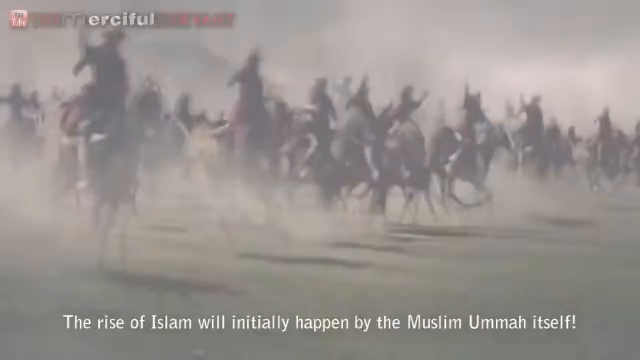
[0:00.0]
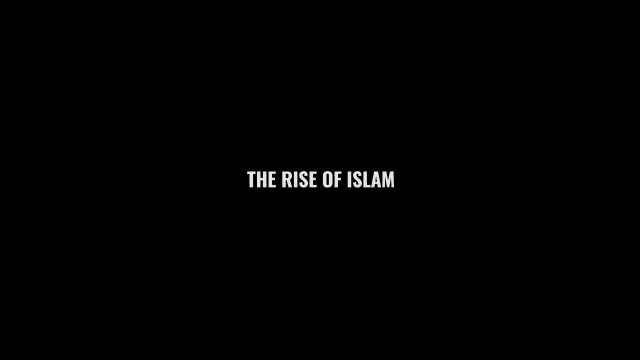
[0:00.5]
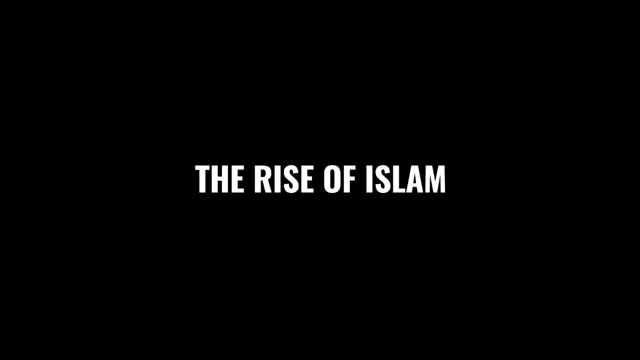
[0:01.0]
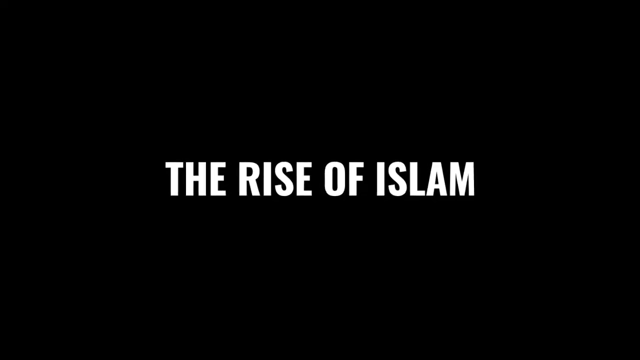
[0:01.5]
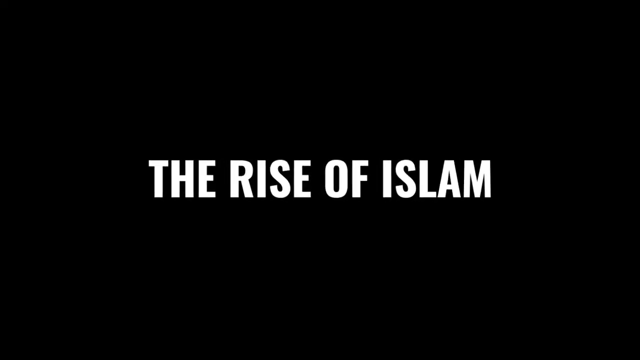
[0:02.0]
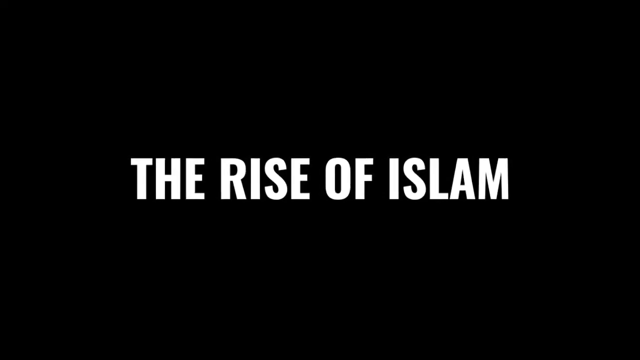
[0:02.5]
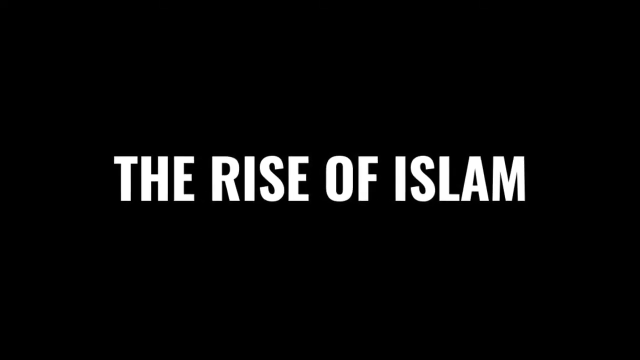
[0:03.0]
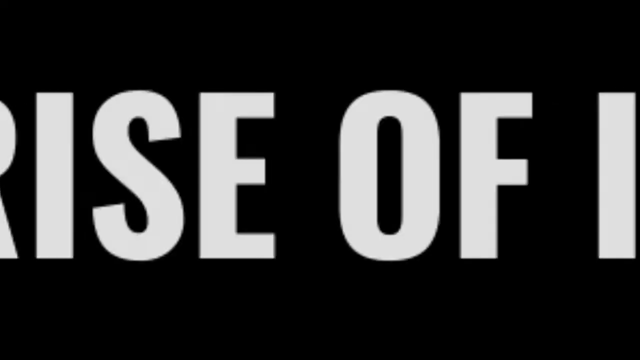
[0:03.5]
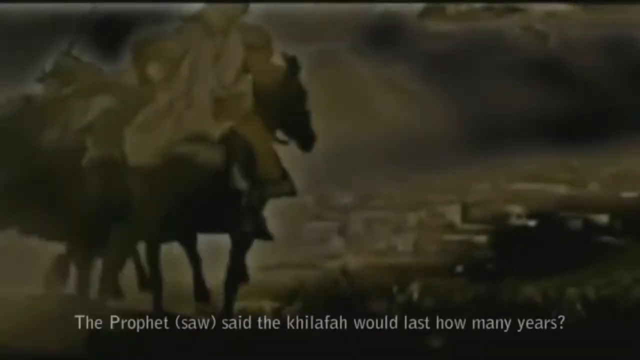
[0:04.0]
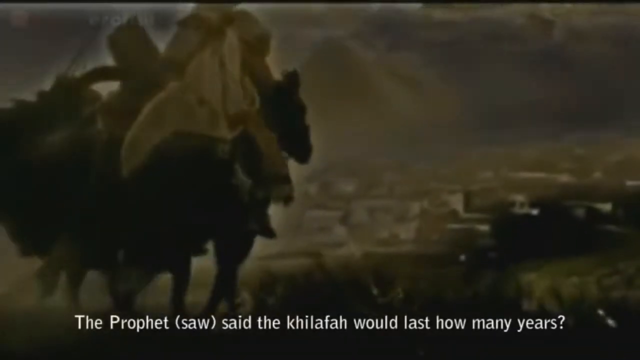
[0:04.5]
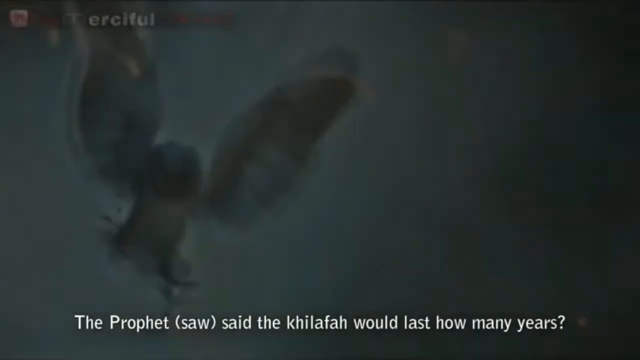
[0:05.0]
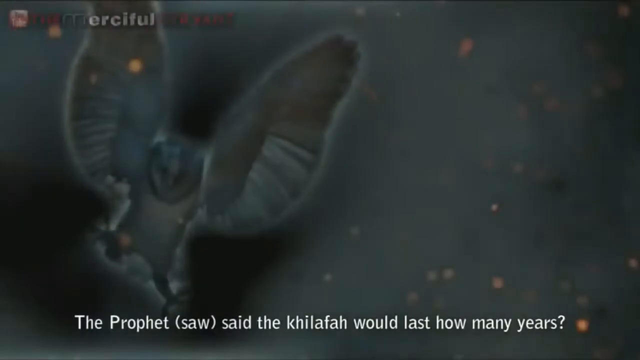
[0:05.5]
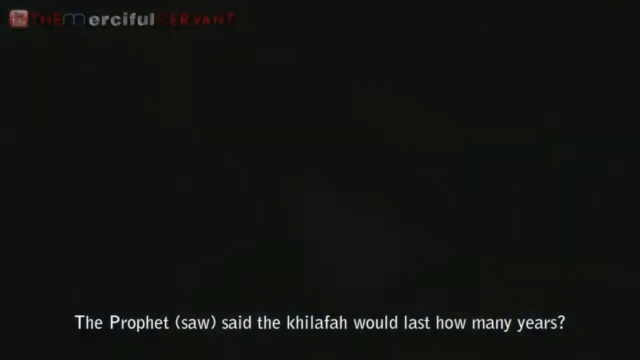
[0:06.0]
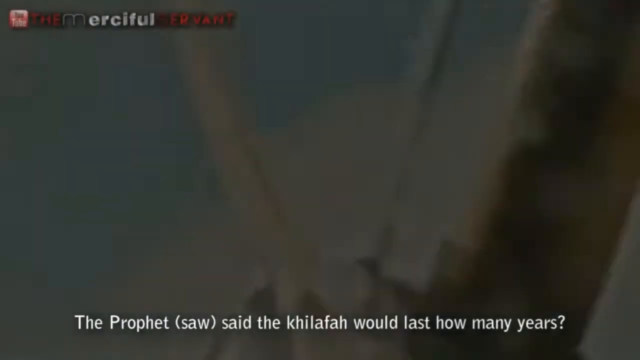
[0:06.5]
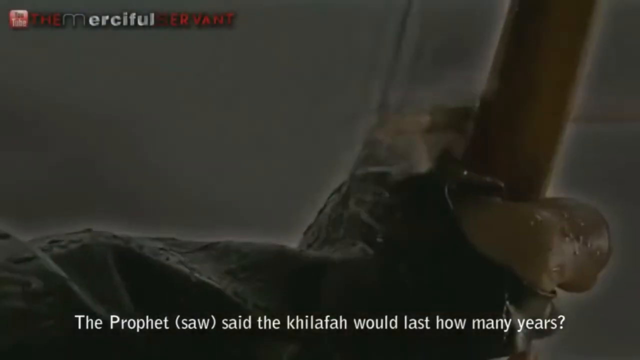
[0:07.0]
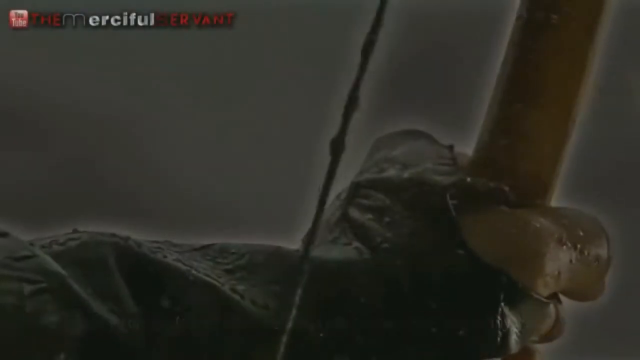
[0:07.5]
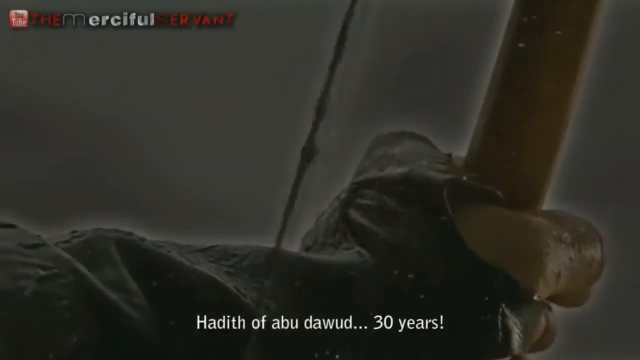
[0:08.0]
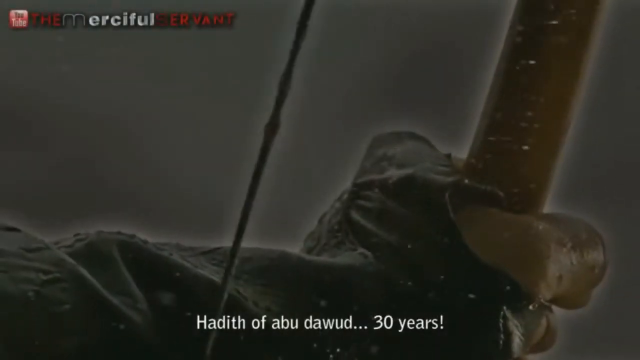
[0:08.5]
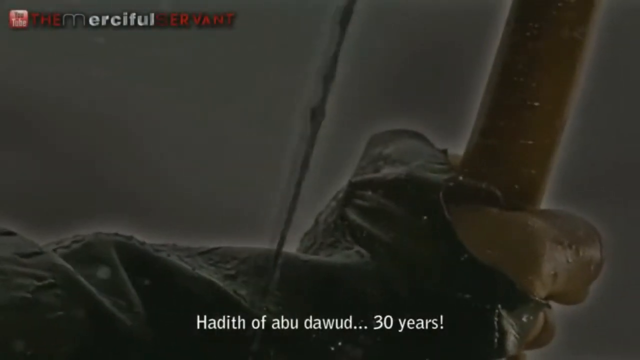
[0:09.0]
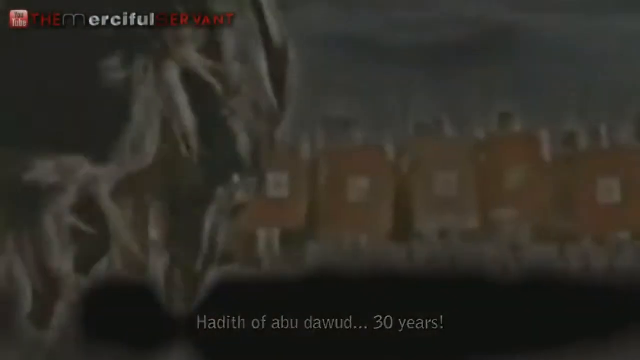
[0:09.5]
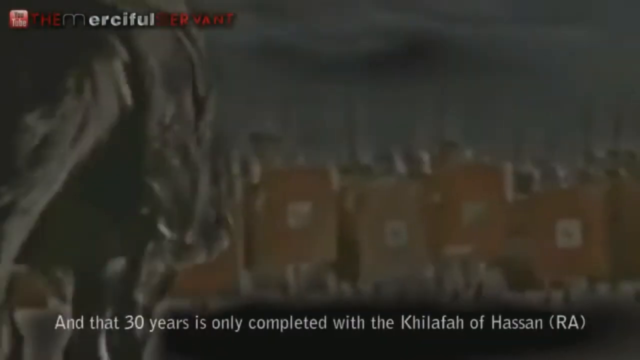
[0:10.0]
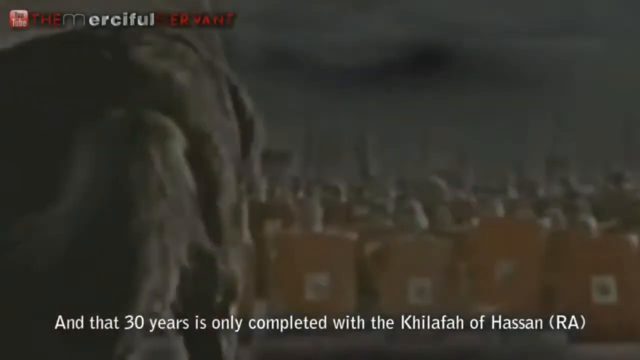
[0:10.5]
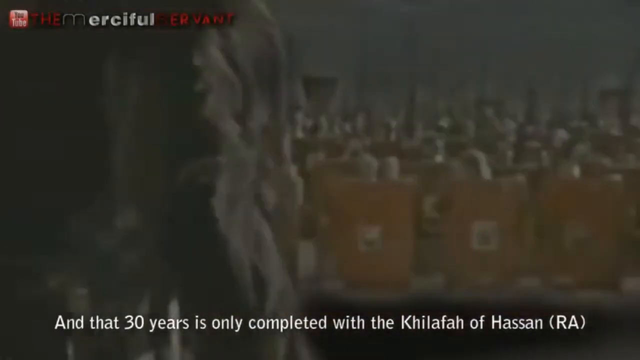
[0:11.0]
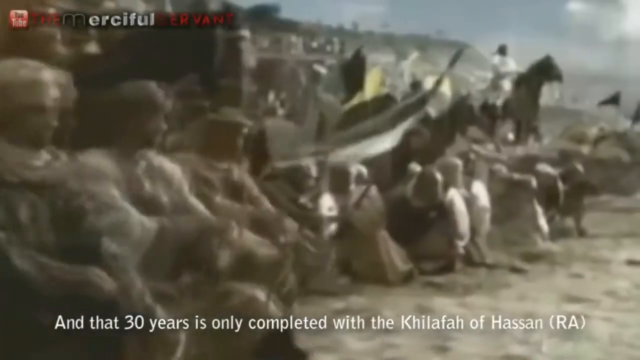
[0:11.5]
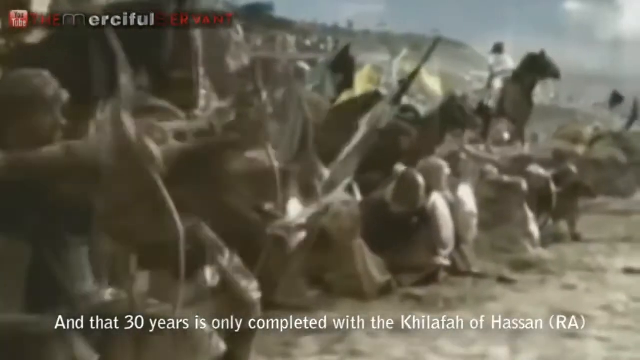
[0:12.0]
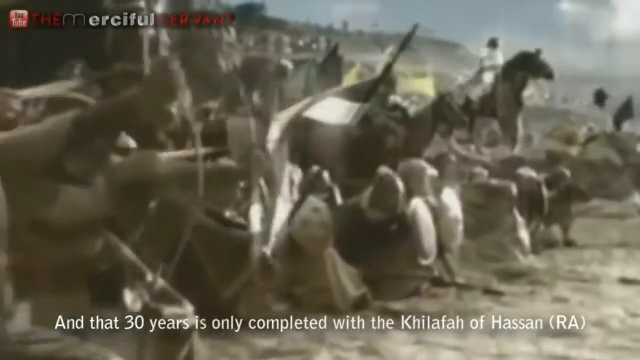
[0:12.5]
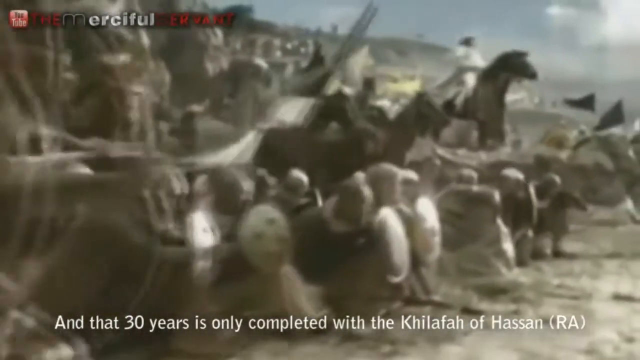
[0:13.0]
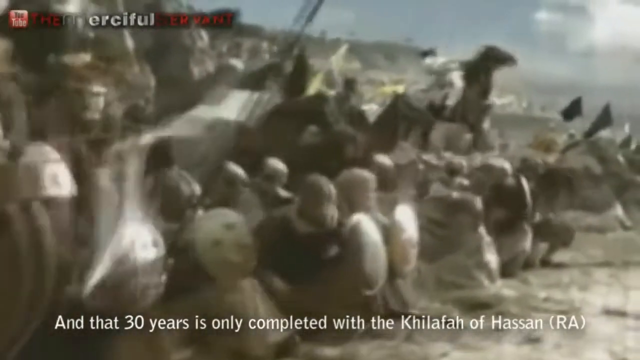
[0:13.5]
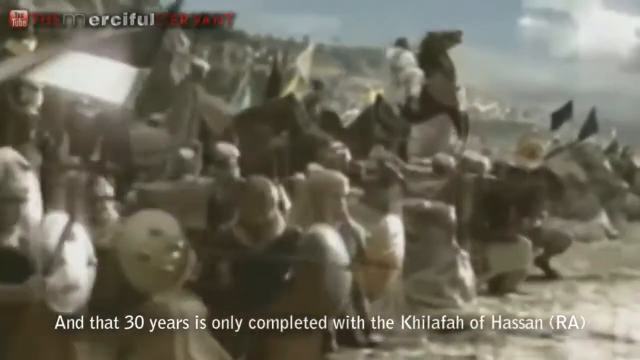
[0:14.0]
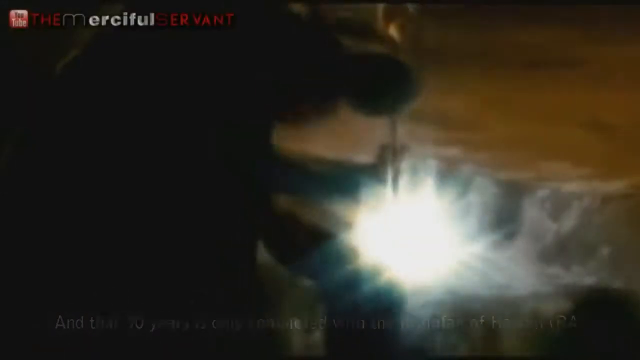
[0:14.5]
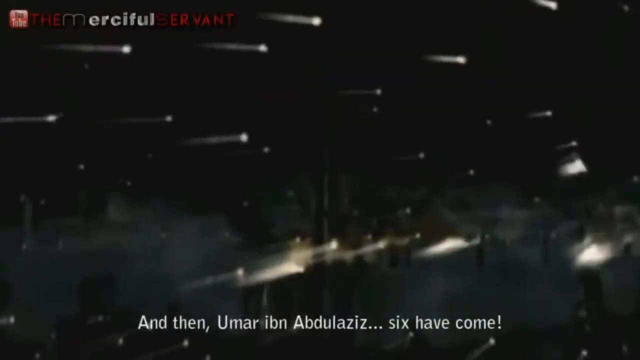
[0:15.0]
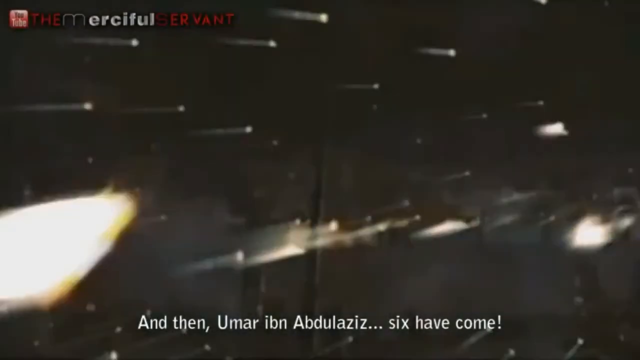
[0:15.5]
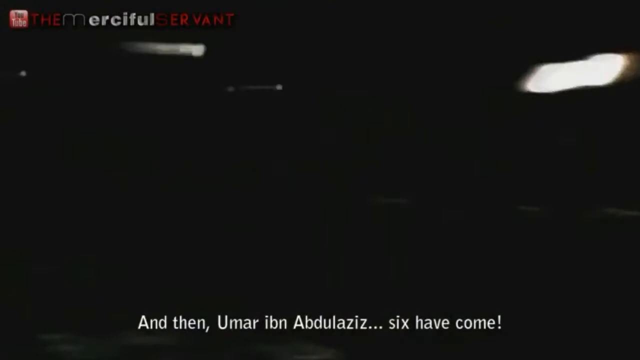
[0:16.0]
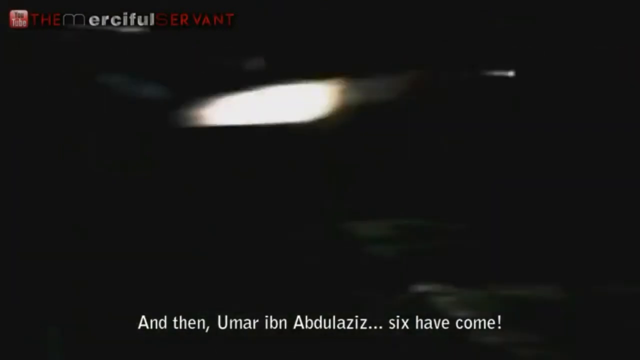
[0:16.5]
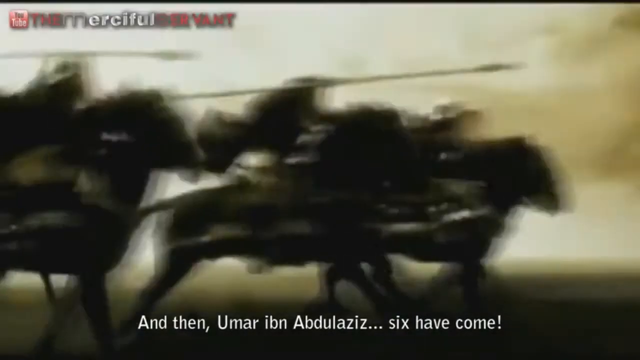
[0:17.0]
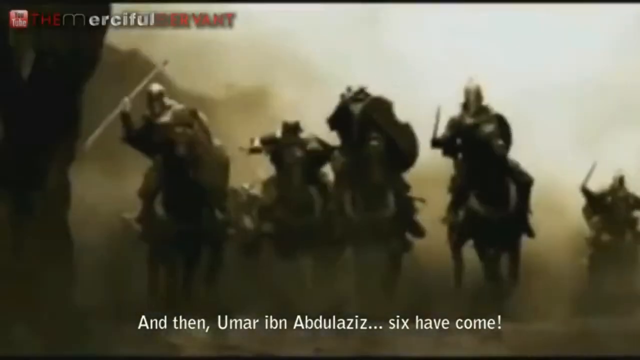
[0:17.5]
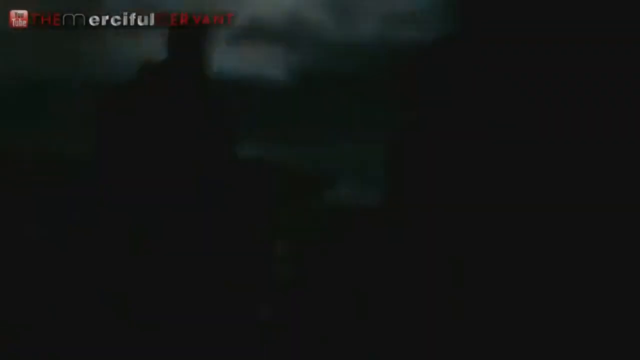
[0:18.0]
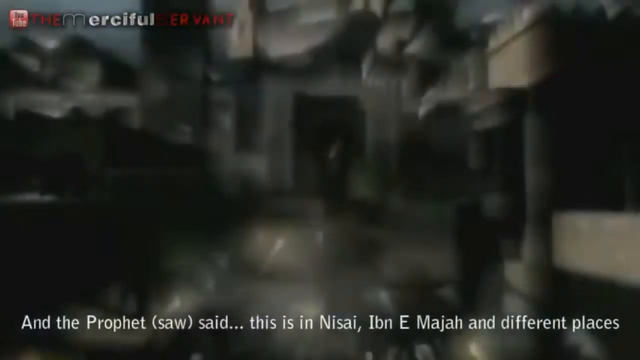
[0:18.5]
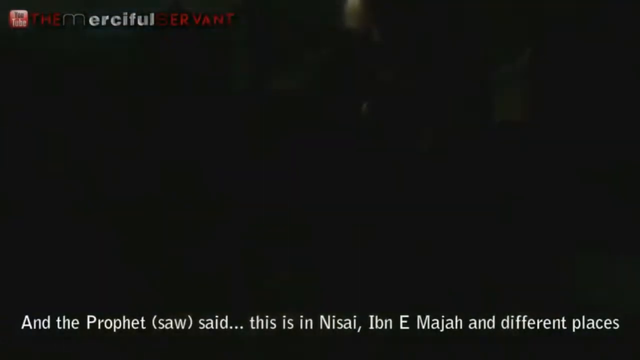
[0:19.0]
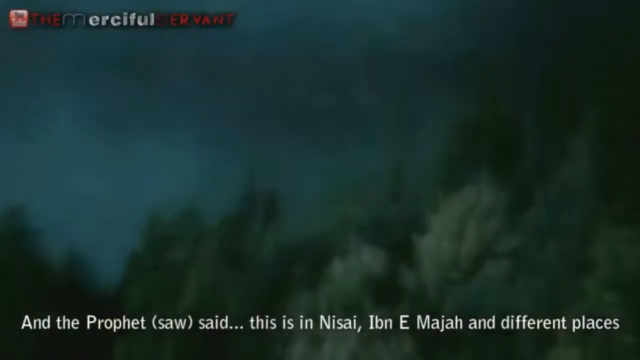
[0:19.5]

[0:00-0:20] The video opens on a black screen with "The Rise of Islam" in white writing. It then shows people of Arabic descent who look as though they are going to some type of war. Men kneel on the ground shooting arrows, and men ride horses in multitudes of hundreds and thousands. They are dressed in Arabic clothing and ride both in daylight and at night. An owl flies in the air. Writing at the bottom of the screen tells the story of the war about the rise of Islam.